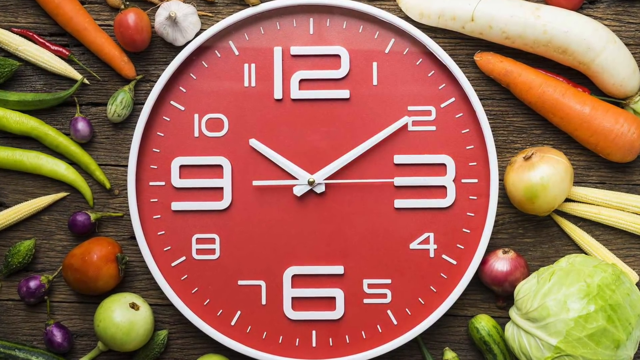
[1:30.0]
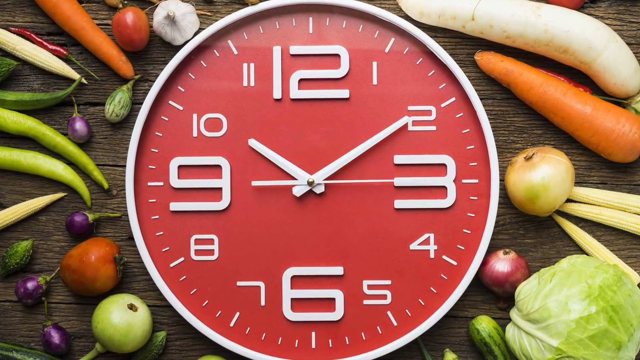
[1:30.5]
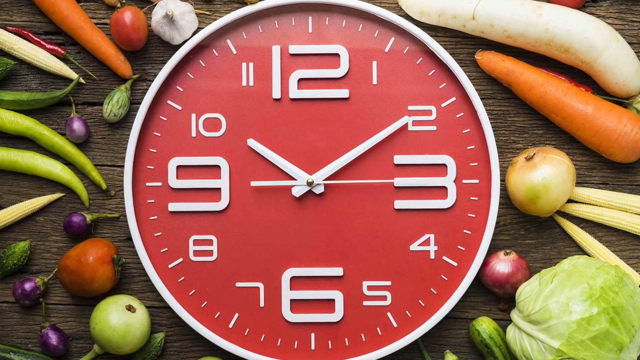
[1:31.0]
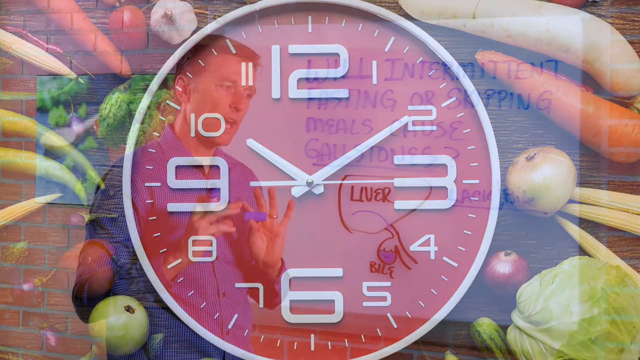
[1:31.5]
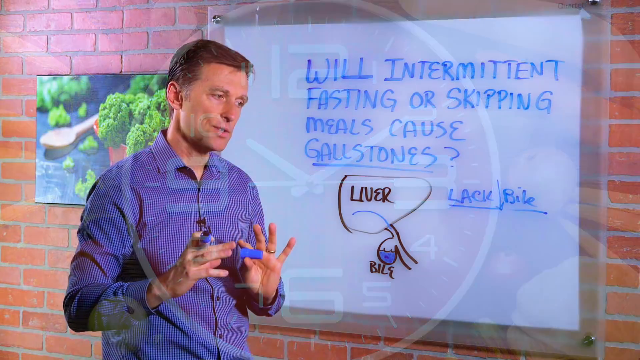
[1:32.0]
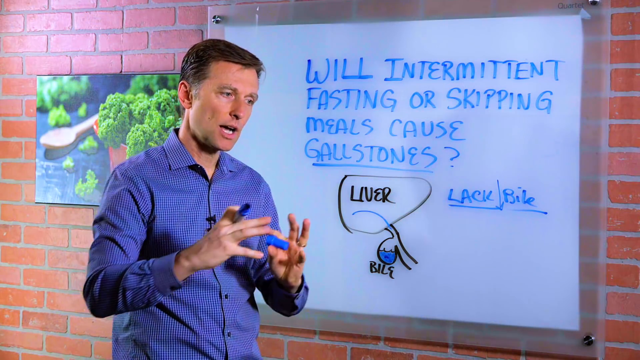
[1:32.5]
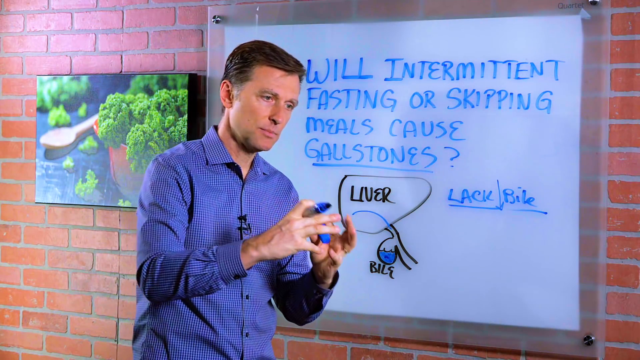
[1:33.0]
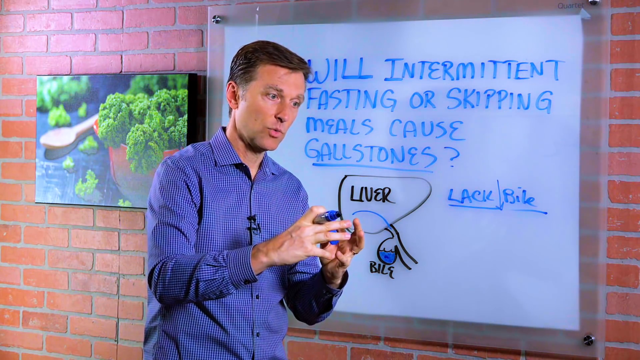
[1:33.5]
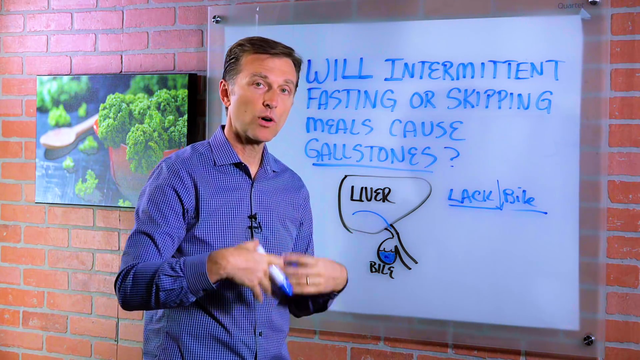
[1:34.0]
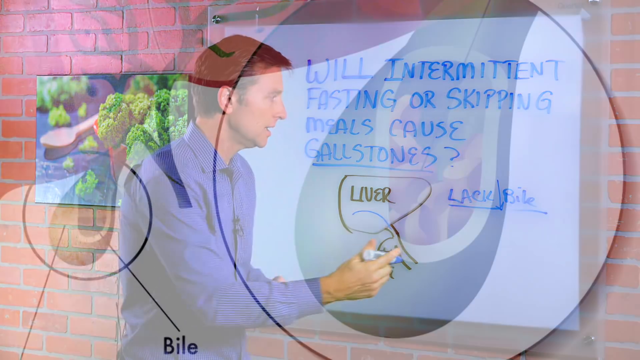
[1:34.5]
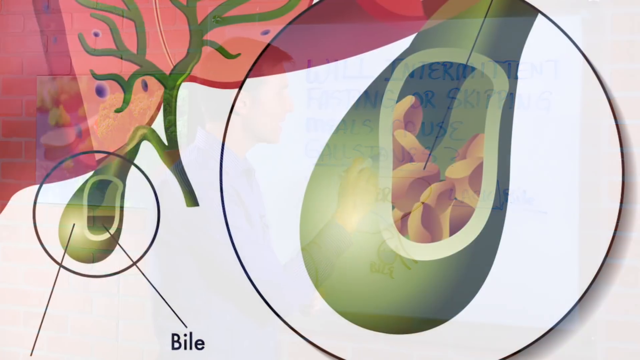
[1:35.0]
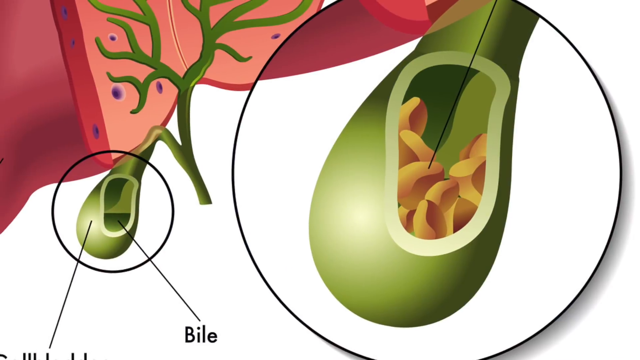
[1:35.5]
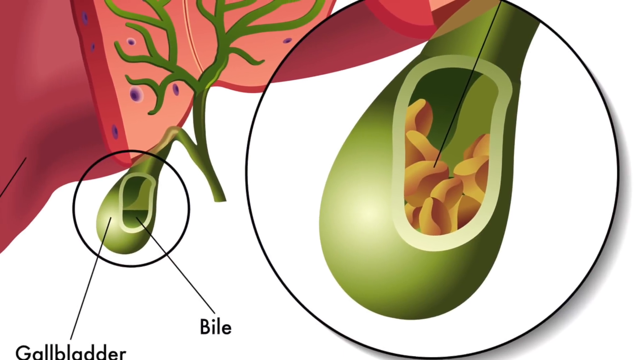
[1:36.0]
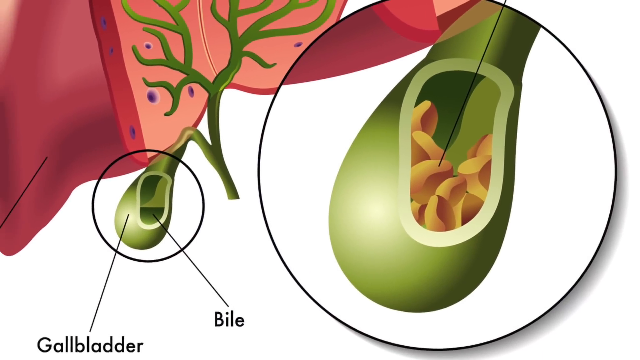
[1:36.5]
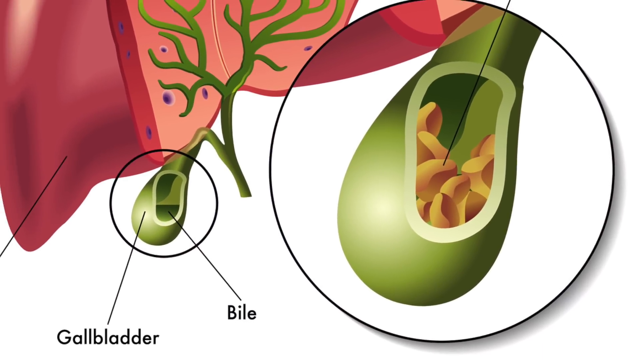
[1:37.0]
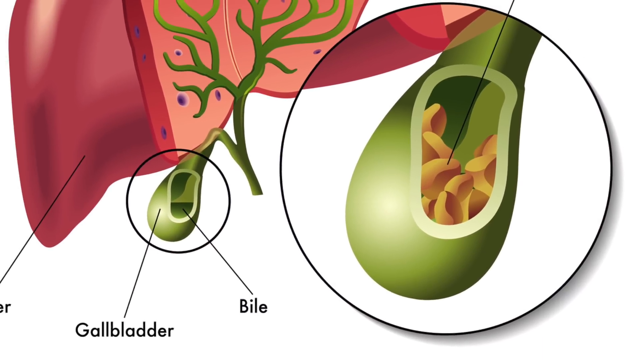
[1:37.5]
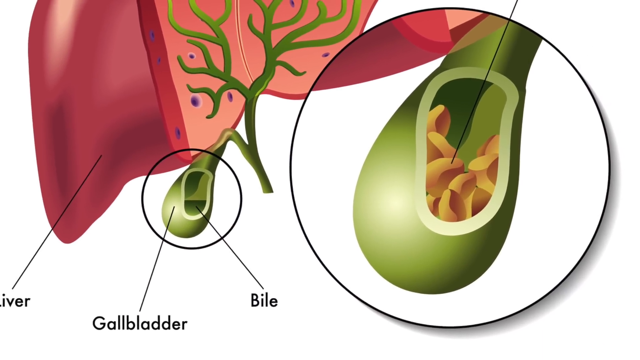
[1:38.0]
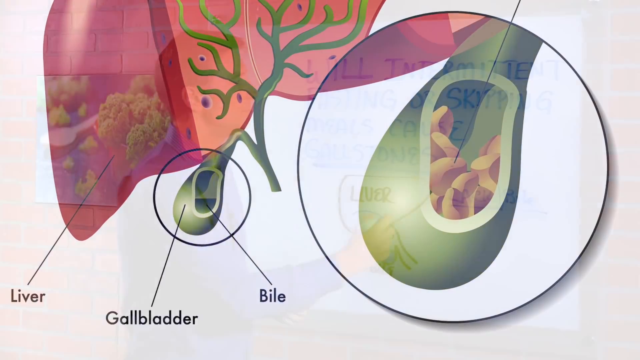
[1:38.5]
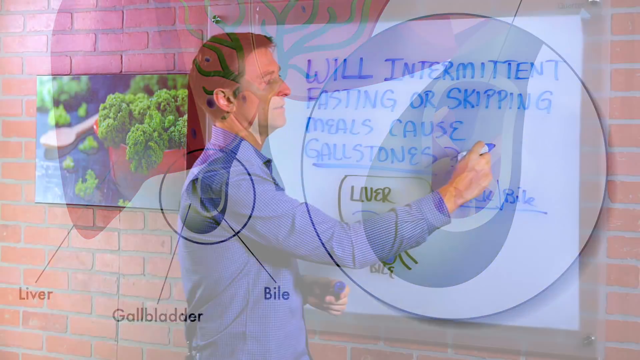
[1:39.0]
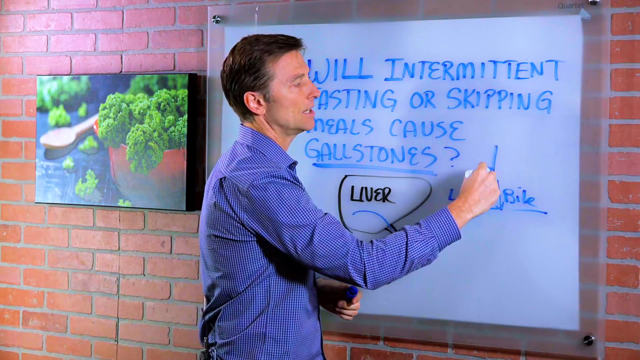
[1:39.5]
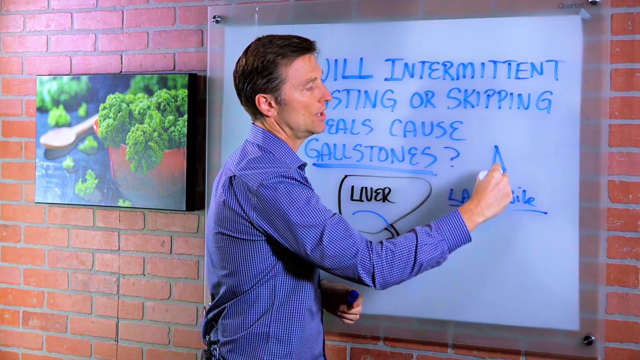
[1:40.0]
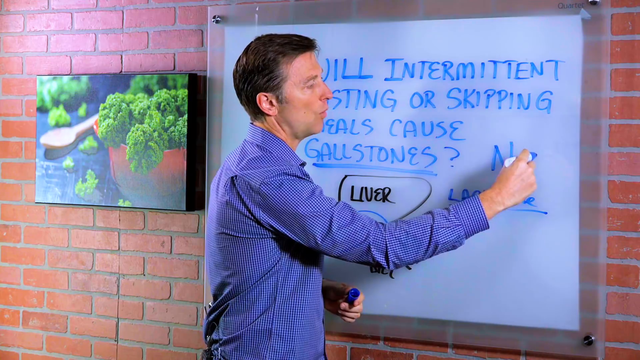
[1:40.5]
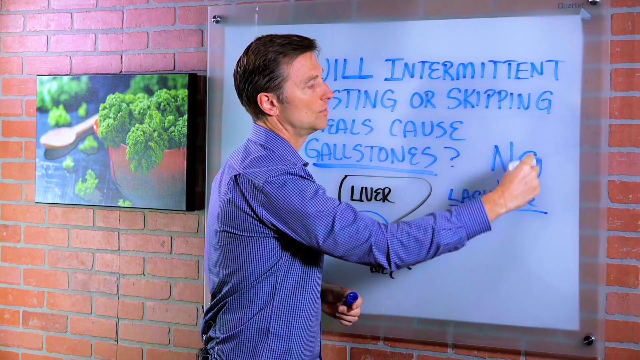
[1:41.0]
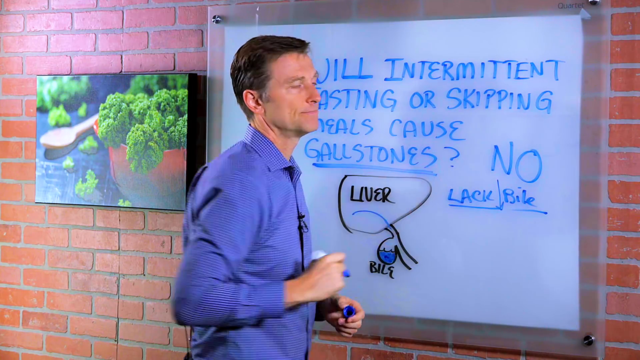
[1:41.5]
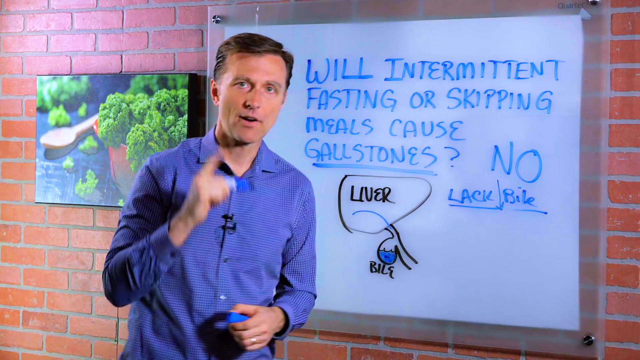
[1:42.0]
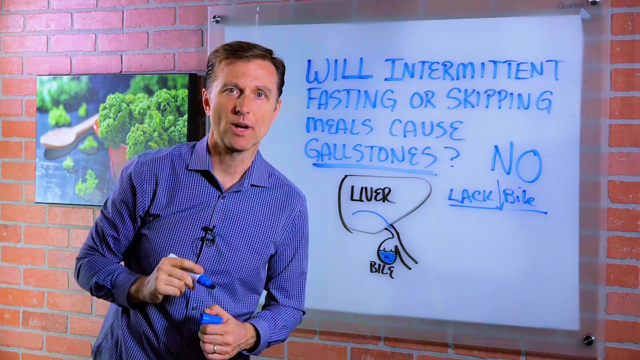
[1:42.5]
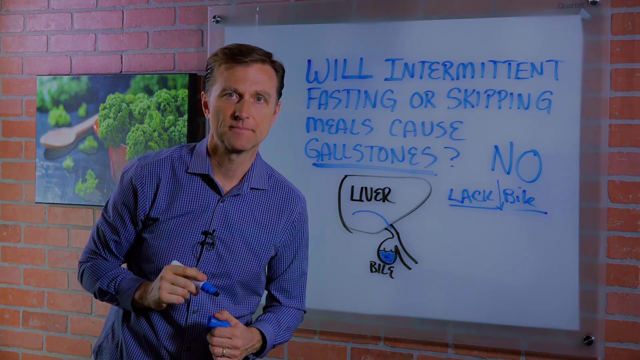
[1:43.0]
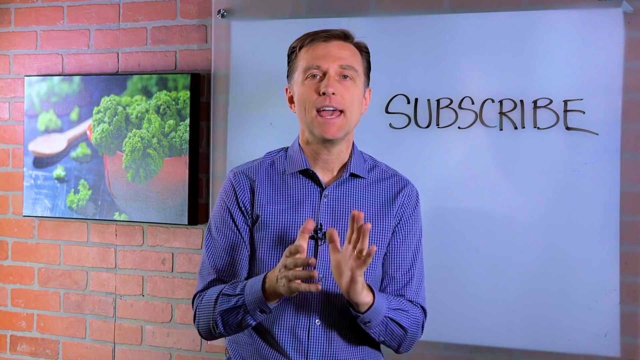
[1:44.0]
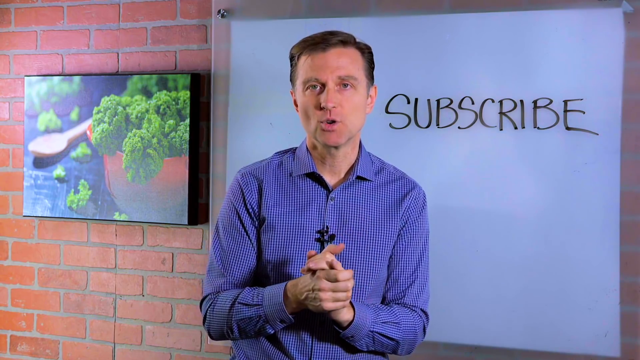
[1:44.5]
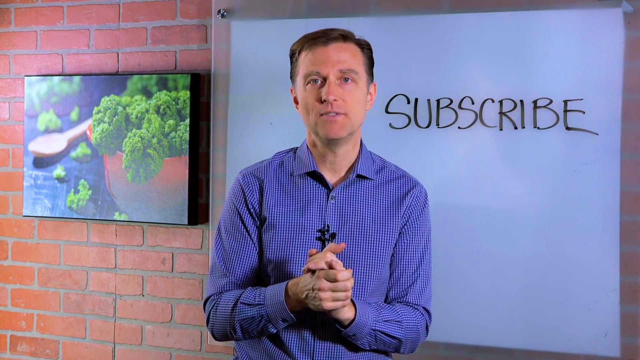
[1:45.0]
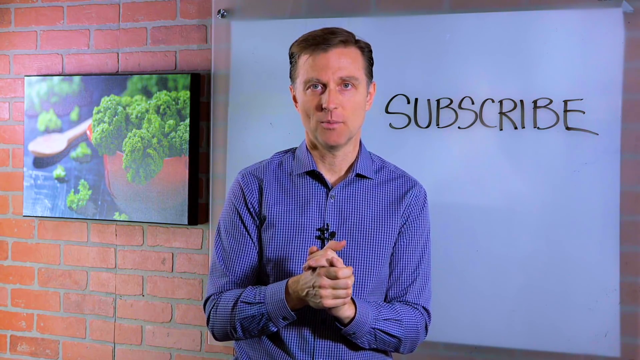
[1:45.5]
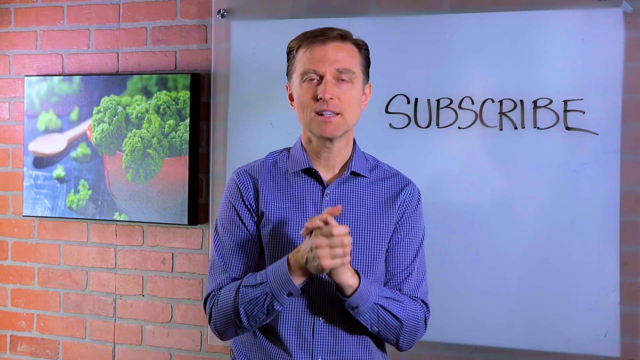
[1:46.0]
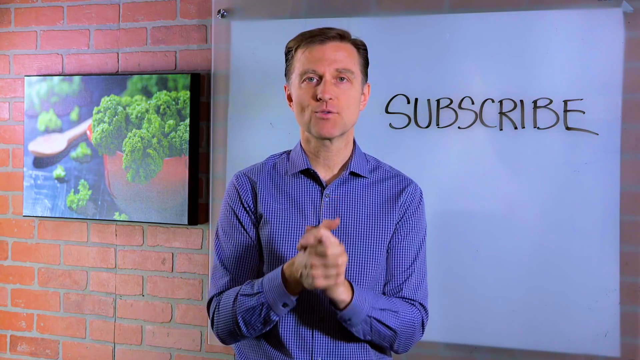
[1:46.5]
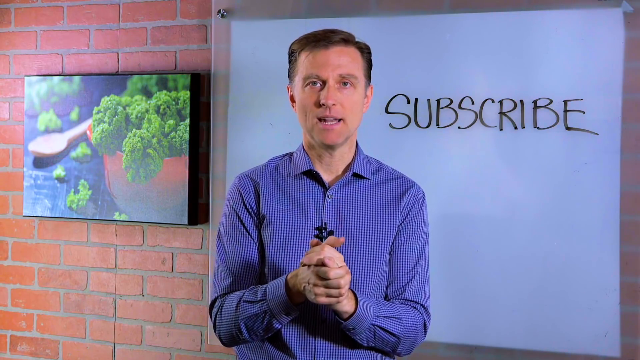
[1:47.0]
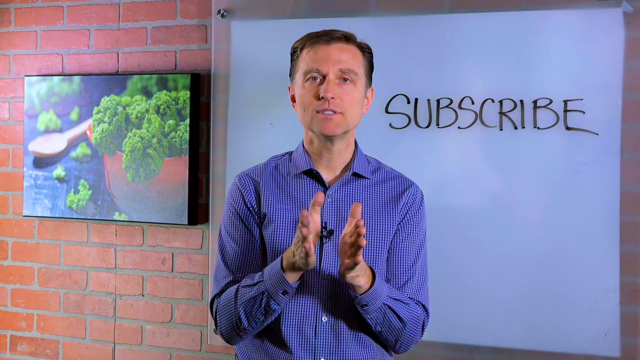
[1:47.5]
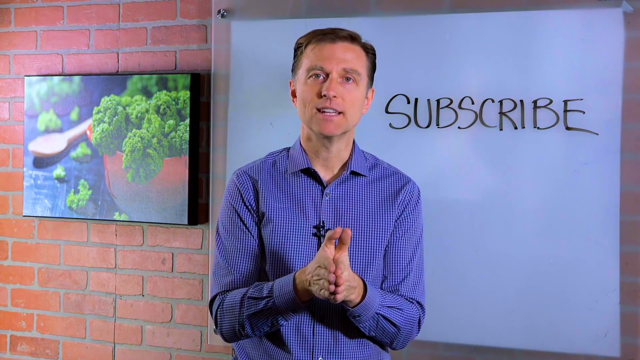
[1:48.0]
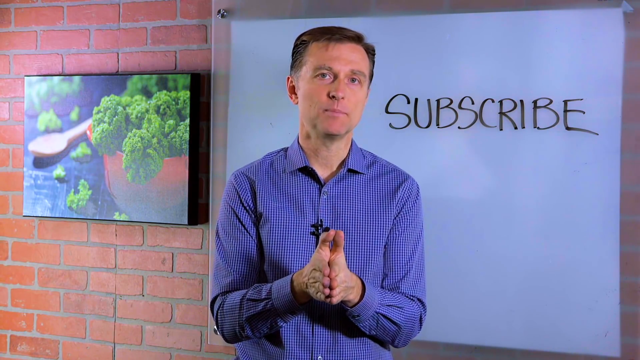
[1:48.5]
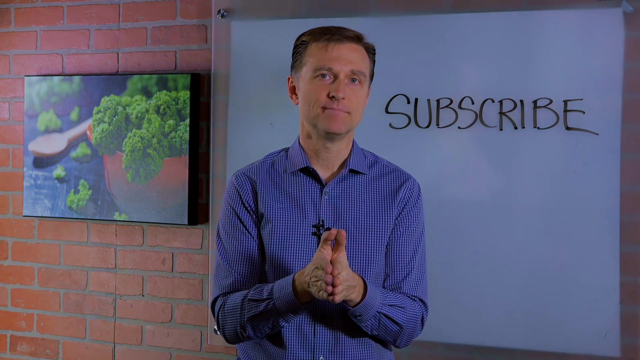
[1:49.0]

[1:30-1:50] A clock with a red face and white numbers, where the 12, 3, 6 and 9 are very large and the other numbers somewhat small, is surrounded by vegetables on a wooden table: carrots, tomatoes, garlic, okra, eggplant, baby corn, what look like a red onion and a white onion, cabbage, turnips and a pepper. The video returns to the man standing in front of the whiteboard, which still says "will intermittent fasting or skipping meals cause gallstones", with his hand-drawn liver and bile duct, the word "LACK", a downward arrow, and "bile". He is very expressive with his hands. Another animation shows the bile duct and what it looks like inside it, along with vessels and a tract to the liver from the bile duct. He writes "no" in very large letters on the whiteboard with his blue dry erase marker. Then the whiteboard has nothing on it except the word "subscribe", and he stands with his hands clasped together, facing the camera. The video goes back to the clock with the red face, white numbers and large 12, 9, 3 and 6, surrounded by various vegetables.